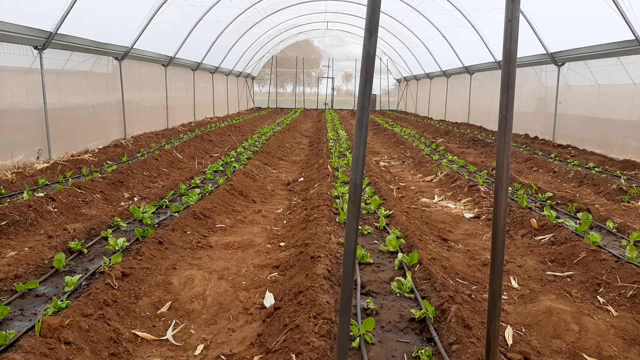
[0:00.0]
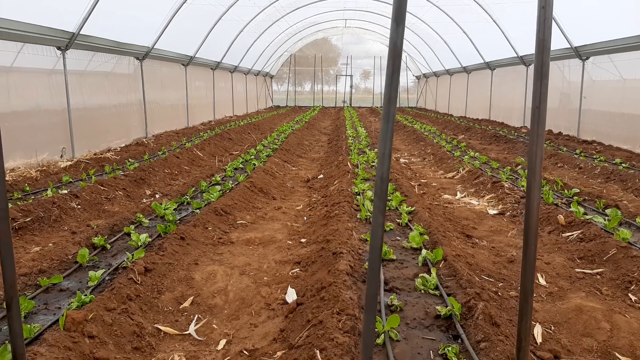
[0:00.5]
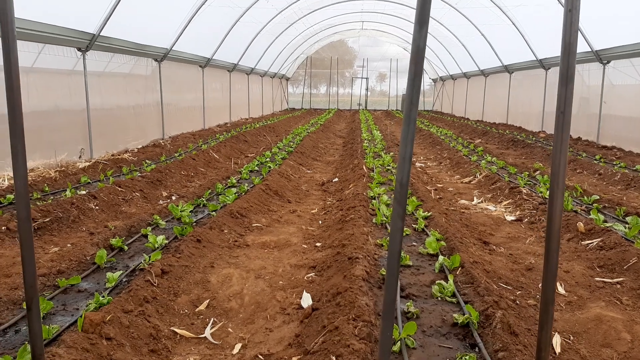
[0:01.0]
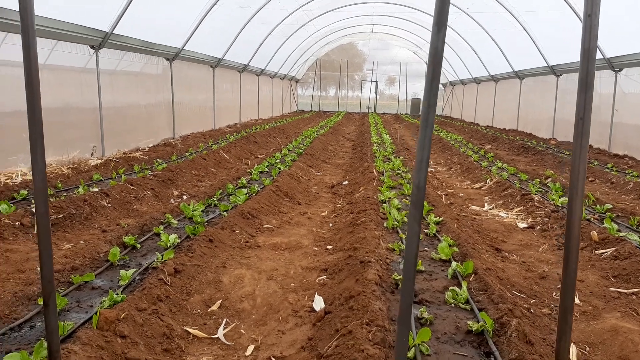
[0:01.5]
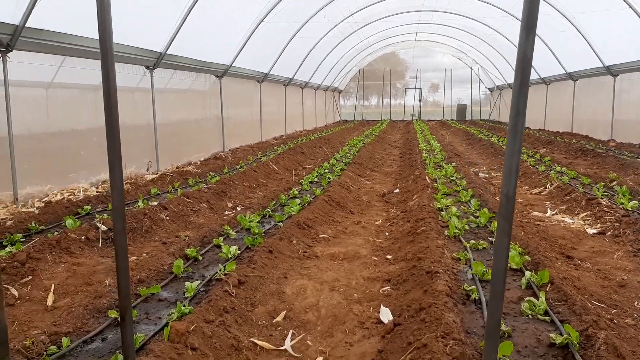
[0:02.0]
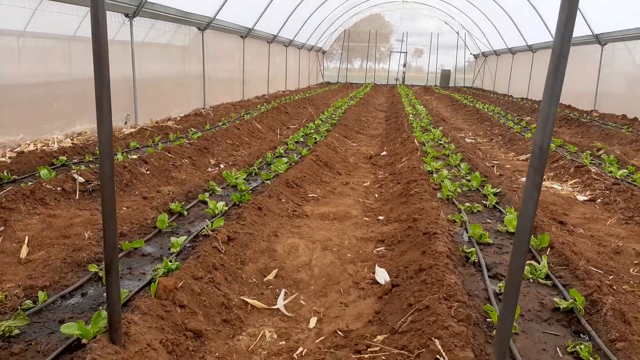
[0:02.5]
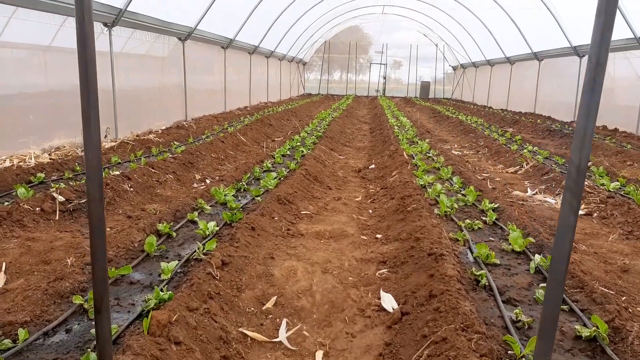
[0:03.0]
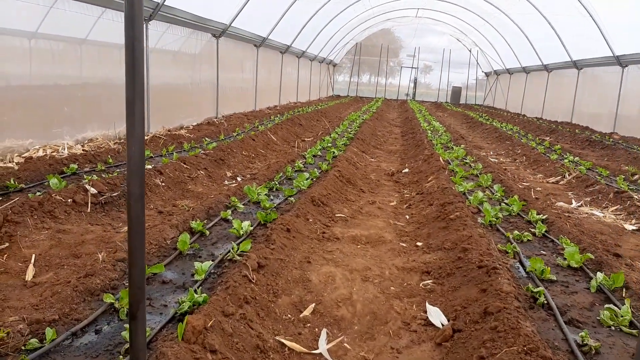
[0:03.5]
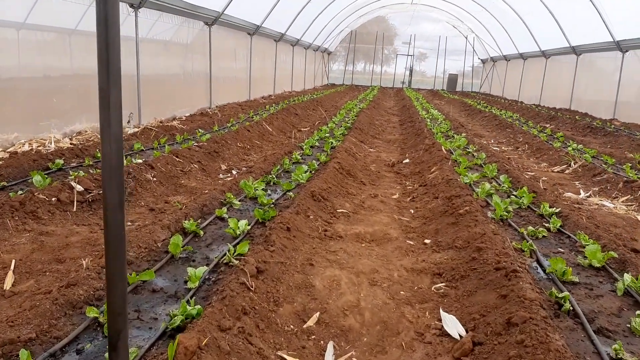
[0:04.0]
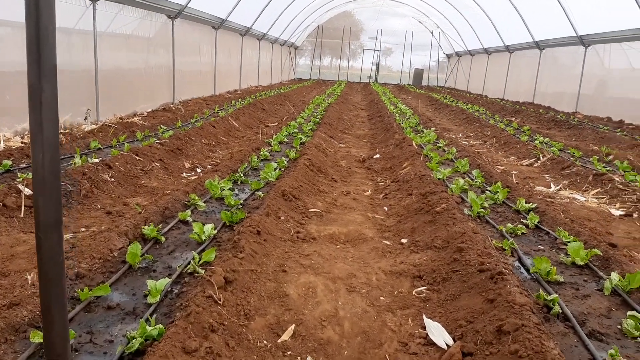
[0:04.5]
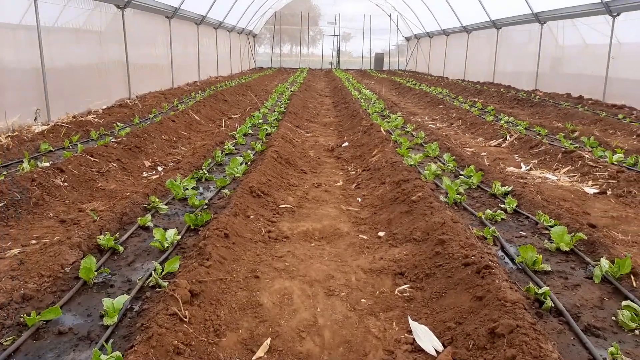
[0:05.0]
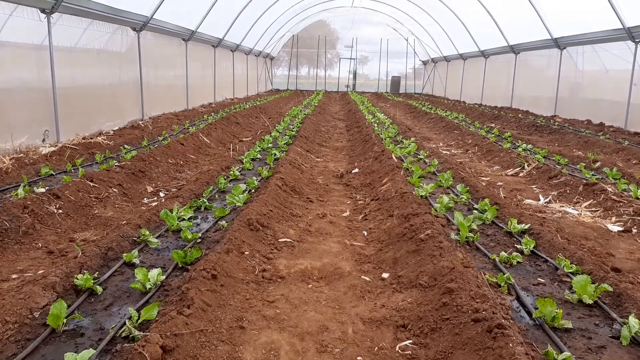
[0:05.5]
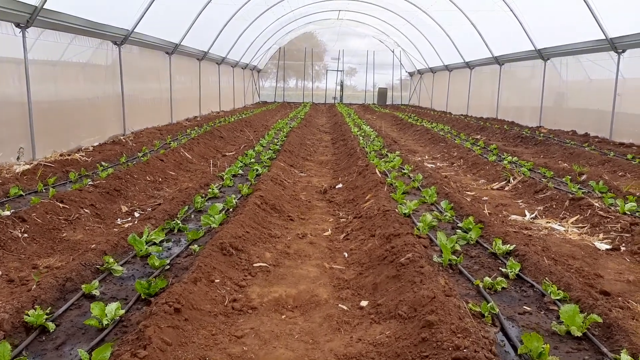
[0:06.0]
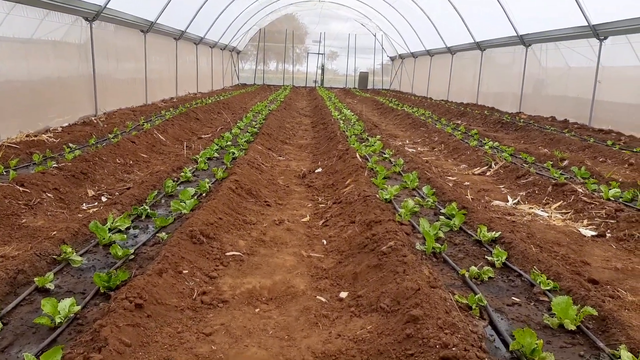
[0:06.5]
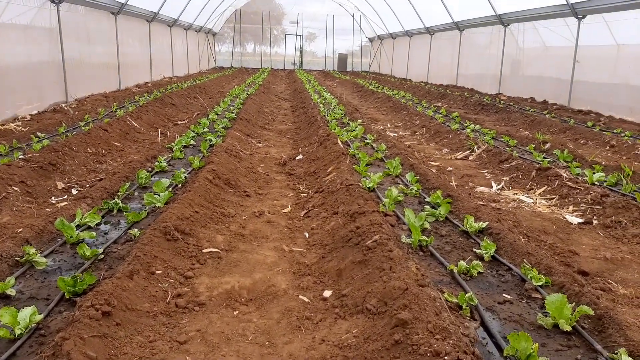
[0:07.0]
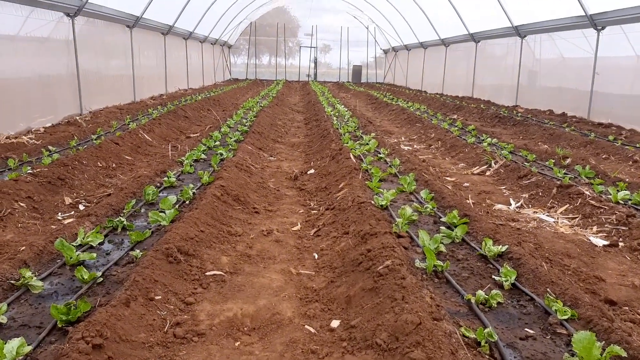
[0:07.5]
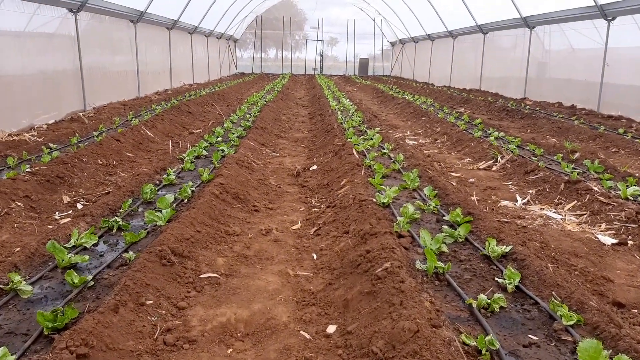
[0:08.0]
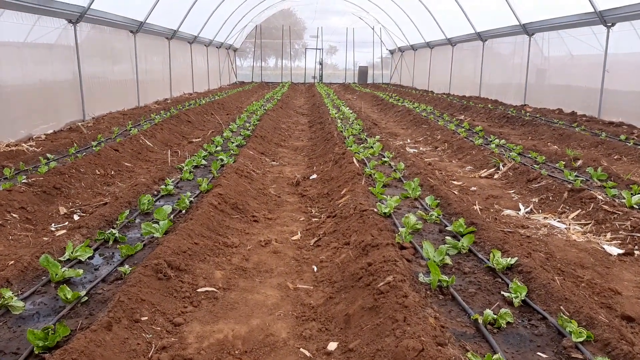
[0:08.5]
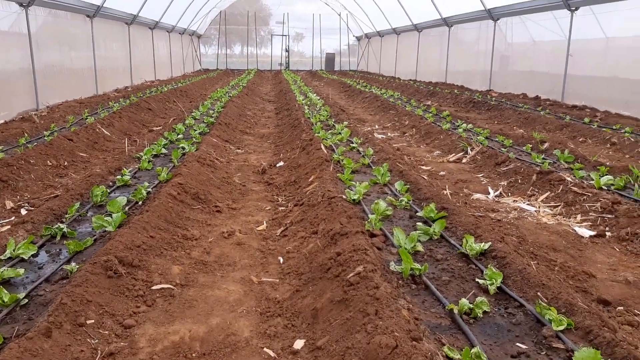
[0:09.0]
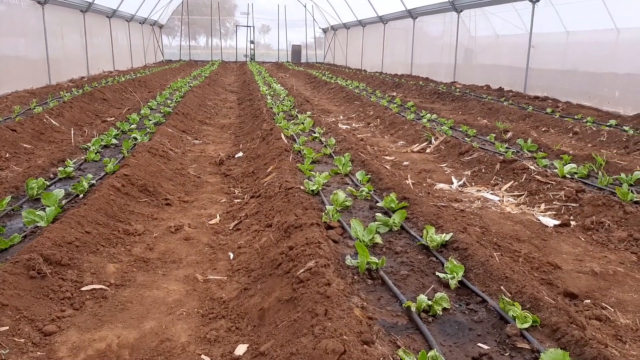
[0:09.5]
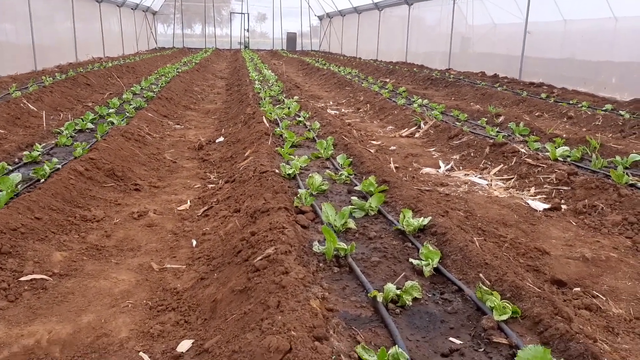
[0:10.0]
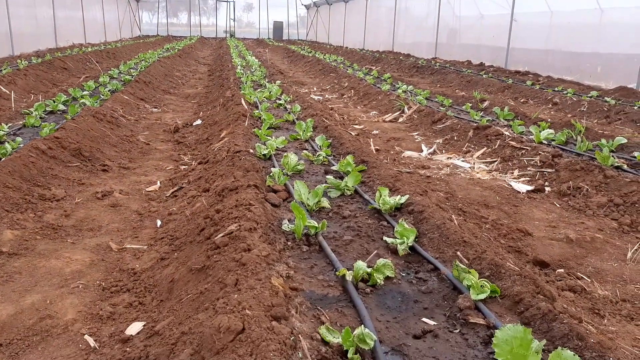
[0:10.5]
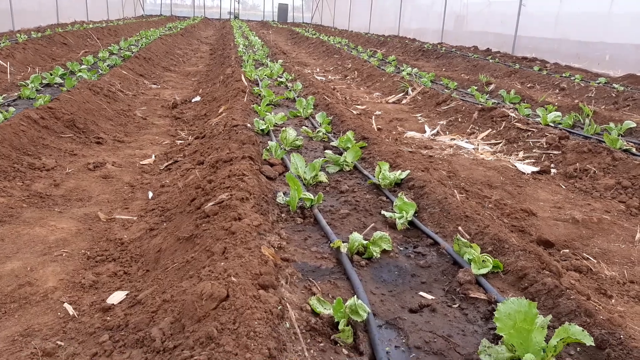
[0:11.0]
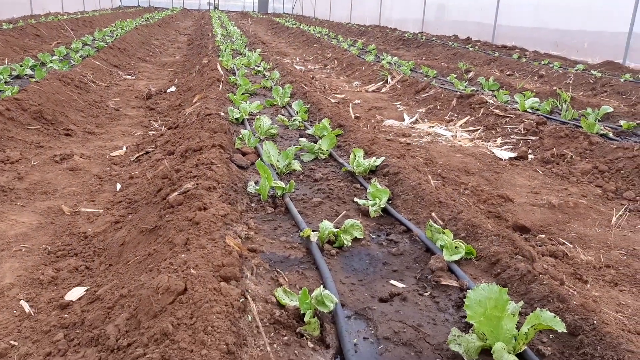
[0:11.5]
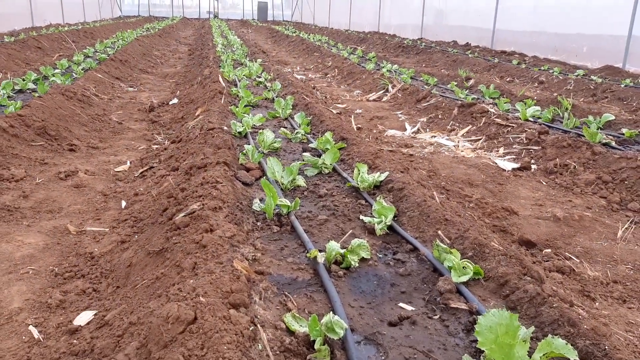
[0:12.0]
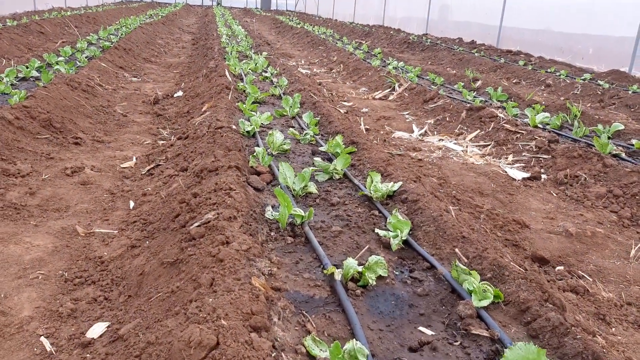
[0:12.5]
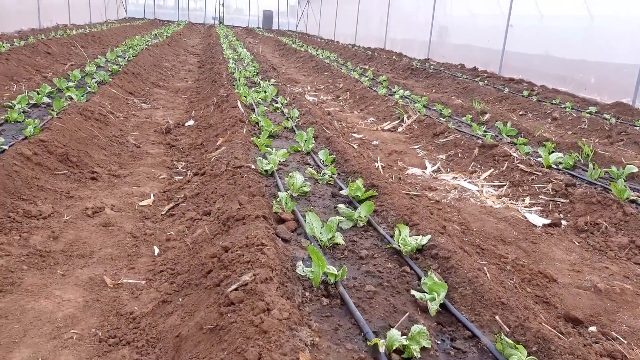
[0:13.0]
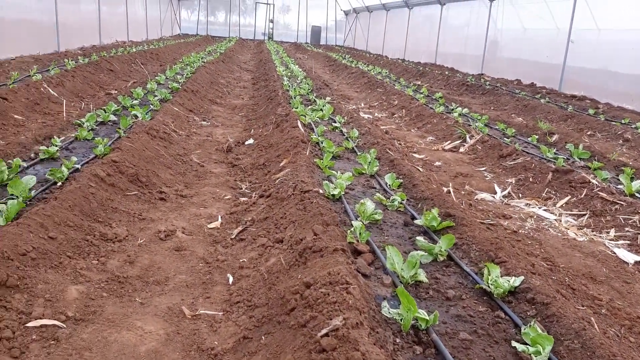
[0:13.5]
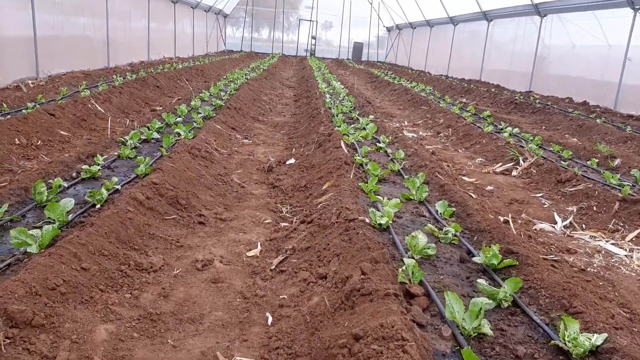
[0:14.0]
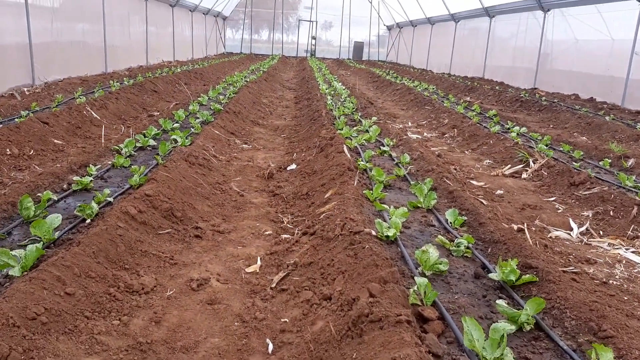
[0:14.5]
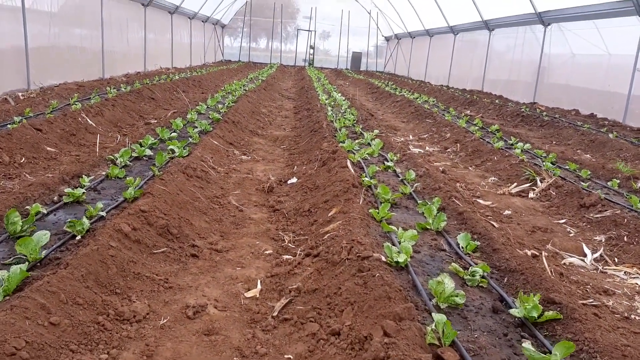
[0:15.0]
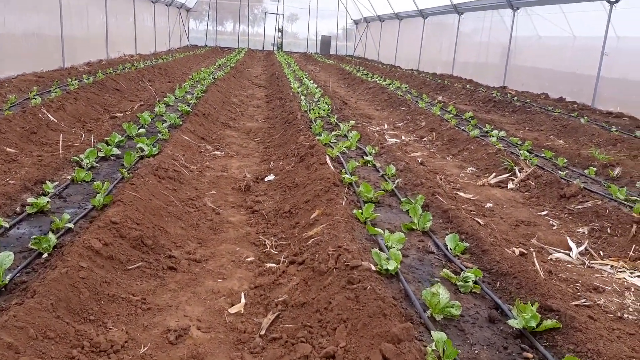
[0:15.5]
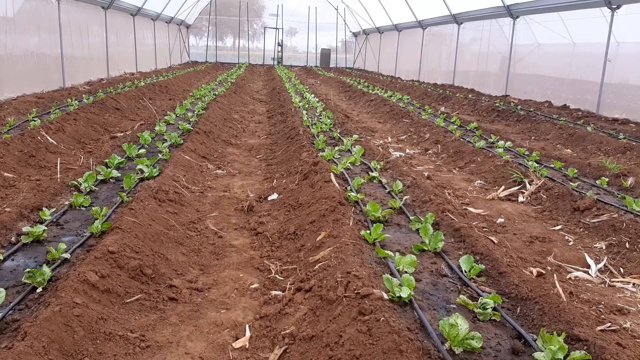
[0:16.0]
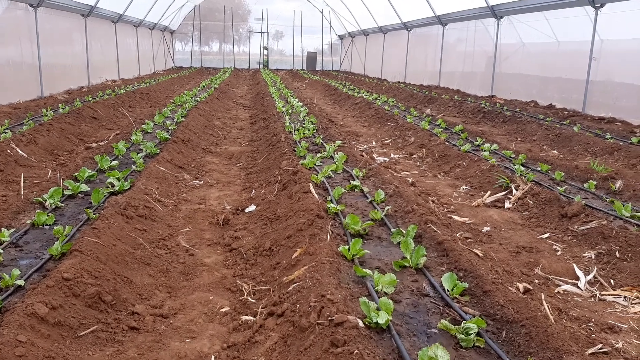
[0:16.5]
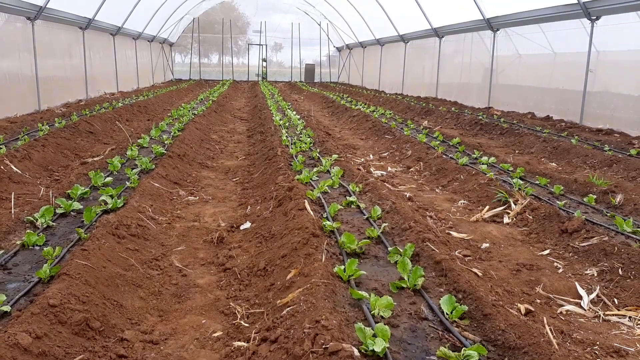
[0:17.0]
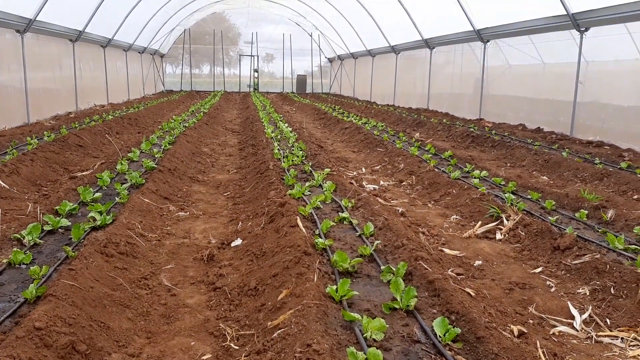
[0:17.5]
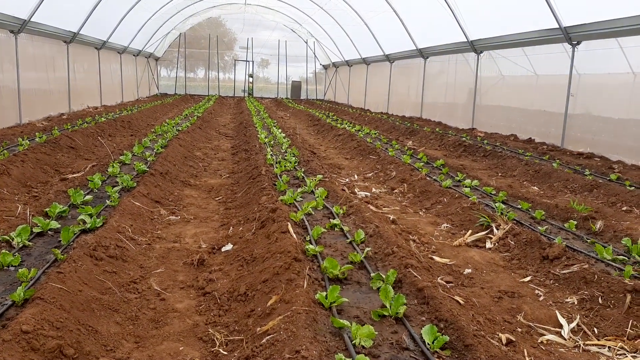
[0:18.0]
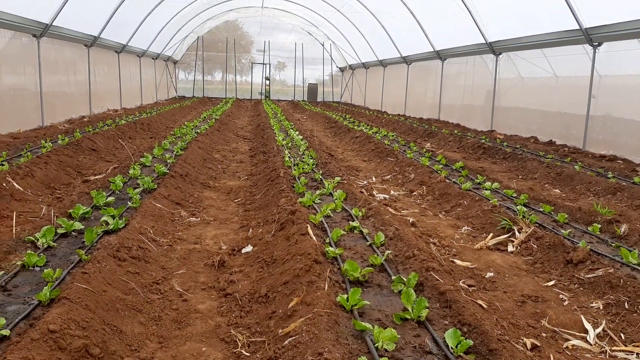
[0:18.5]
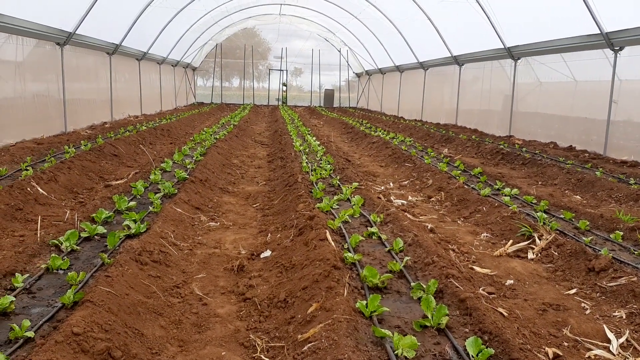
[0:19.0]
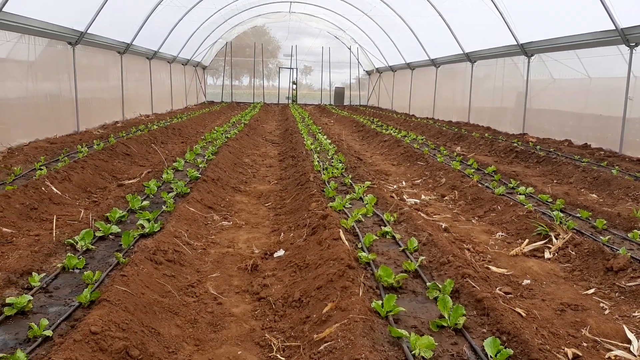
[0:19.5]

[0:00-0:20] The video shows the inside of a large, long, narrow greenhouse during the daytime. Small seedlings and plants grow in long rows, four rows in all, with rows of dirt in between. The plants cannot be identified, and there are no signs or labels on them. The person holding the camera walks very, very slowly down one of the dirt rows between the two middle rows of seedlings. The dirt is dark brown and rich in color. Metal poles give the dome of the nursery or greenhouse its shape, with transparent plastic lining over the poles. The seedlings are green and no bigger than four inches each. There is no vegetation other than these plants. It is a dreary day, not a sunny one.